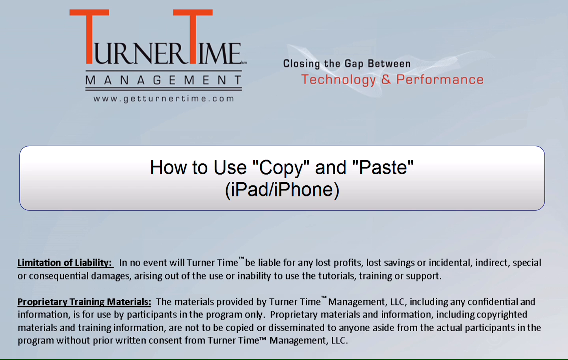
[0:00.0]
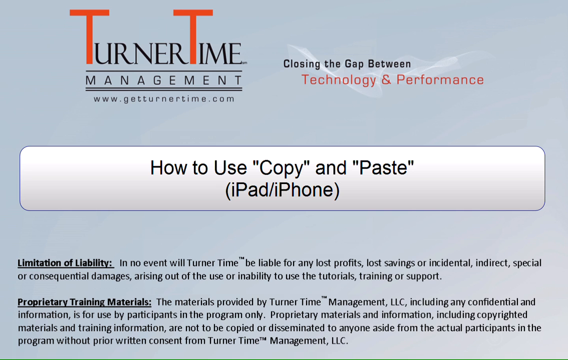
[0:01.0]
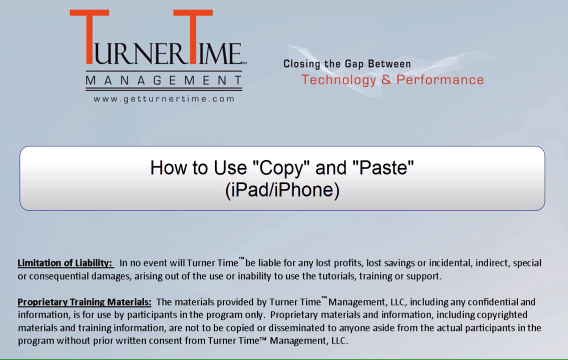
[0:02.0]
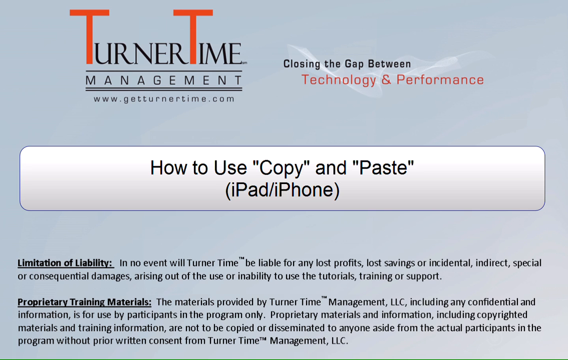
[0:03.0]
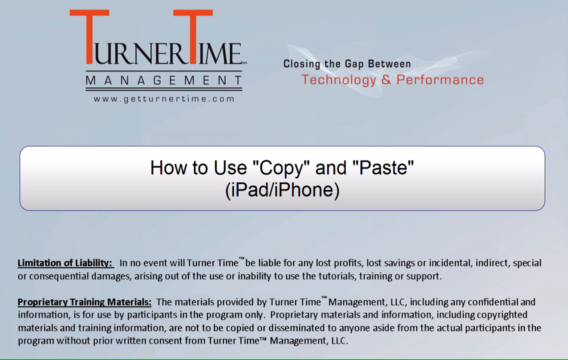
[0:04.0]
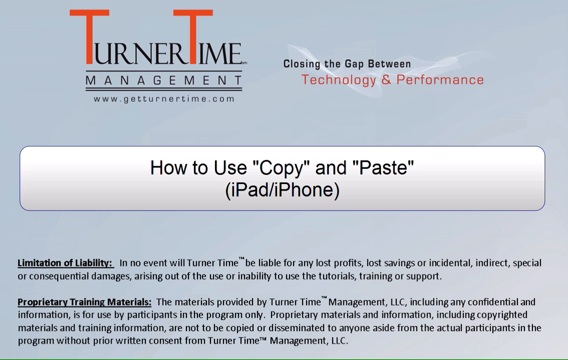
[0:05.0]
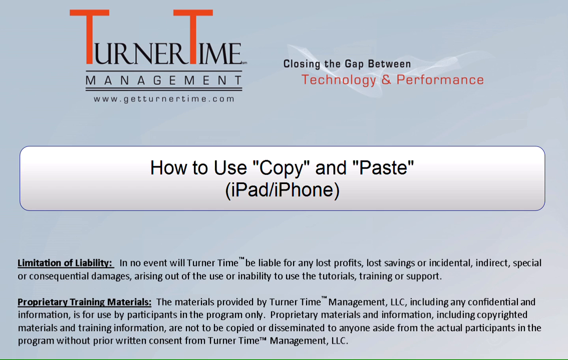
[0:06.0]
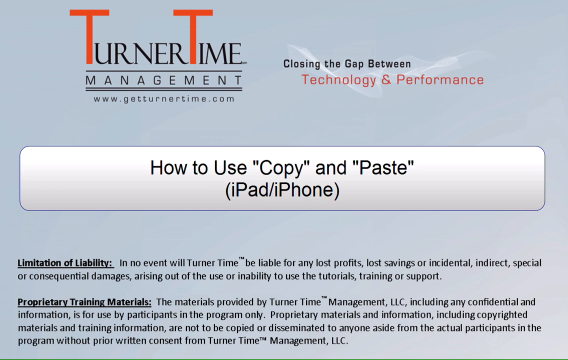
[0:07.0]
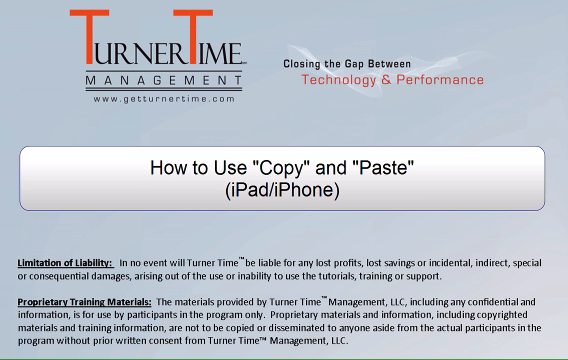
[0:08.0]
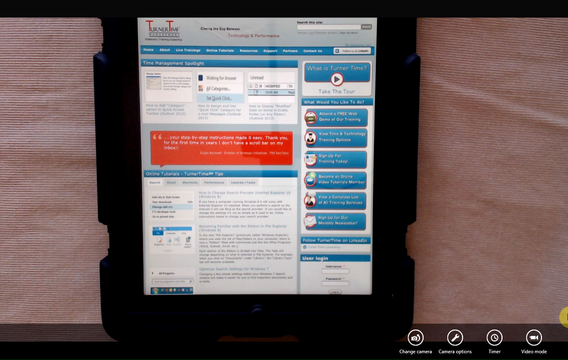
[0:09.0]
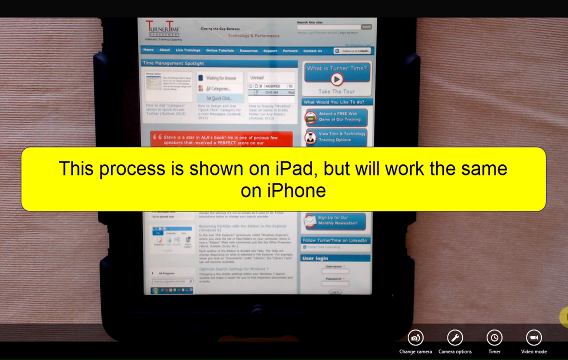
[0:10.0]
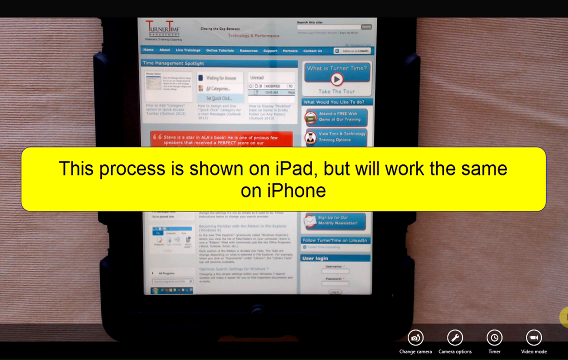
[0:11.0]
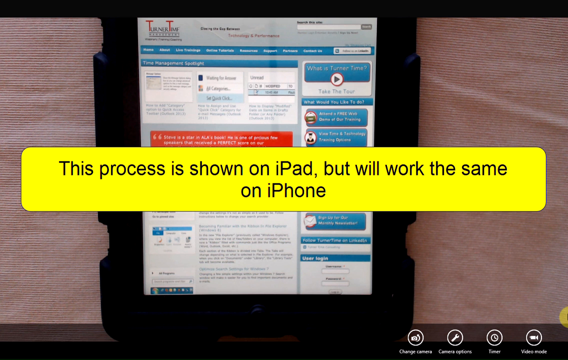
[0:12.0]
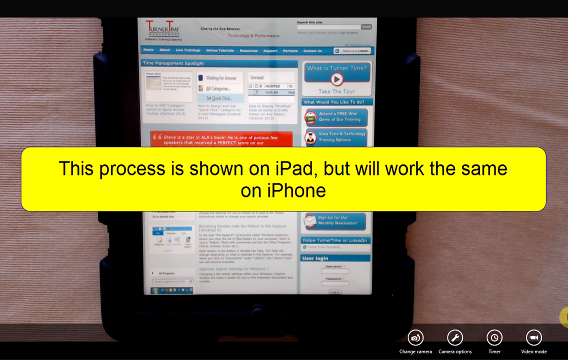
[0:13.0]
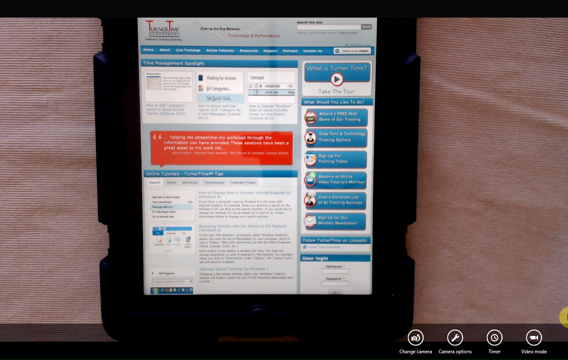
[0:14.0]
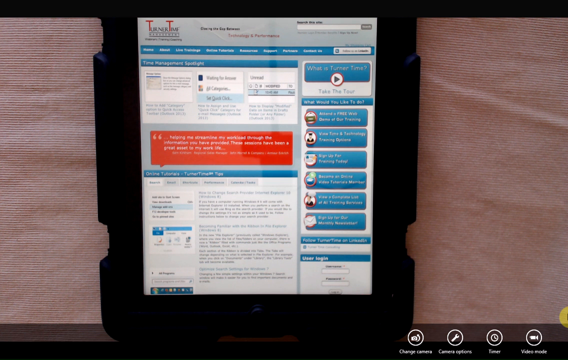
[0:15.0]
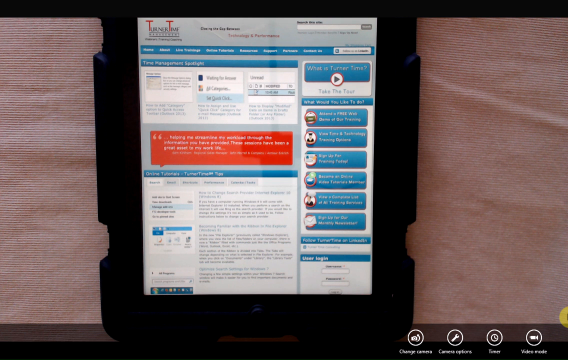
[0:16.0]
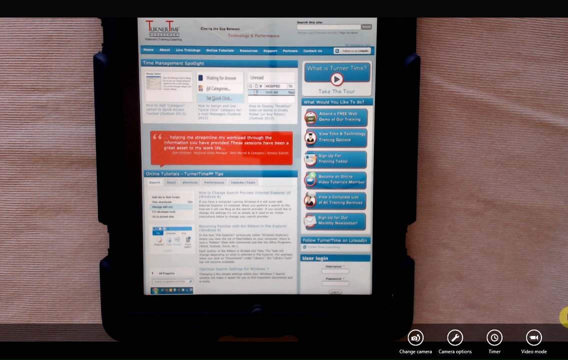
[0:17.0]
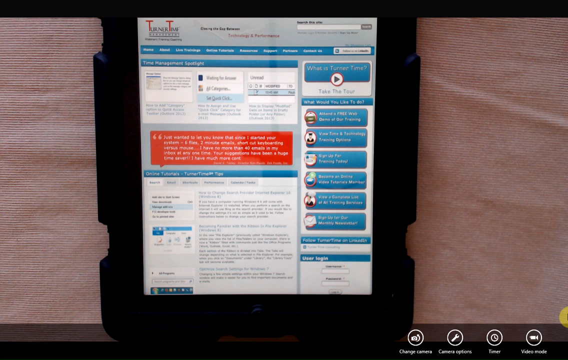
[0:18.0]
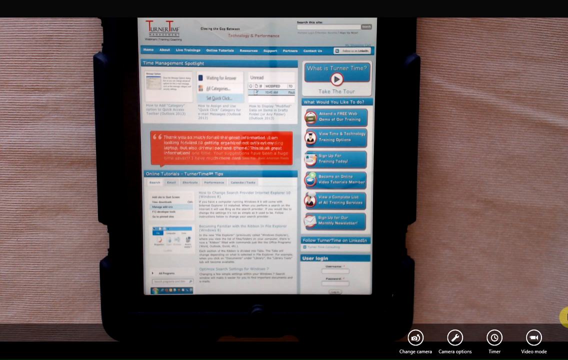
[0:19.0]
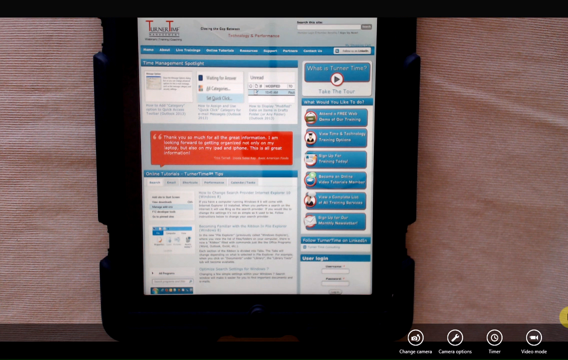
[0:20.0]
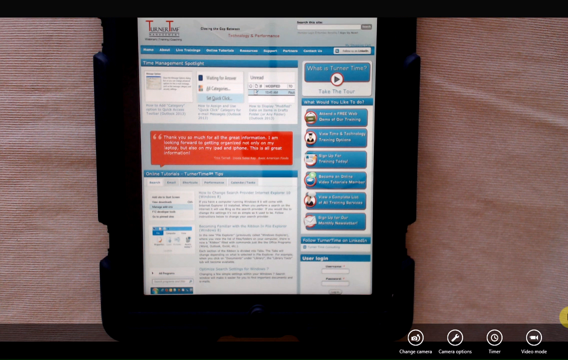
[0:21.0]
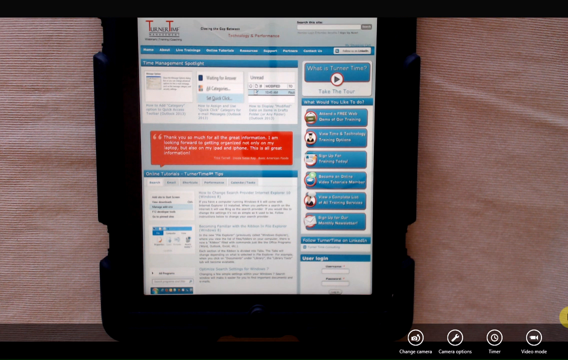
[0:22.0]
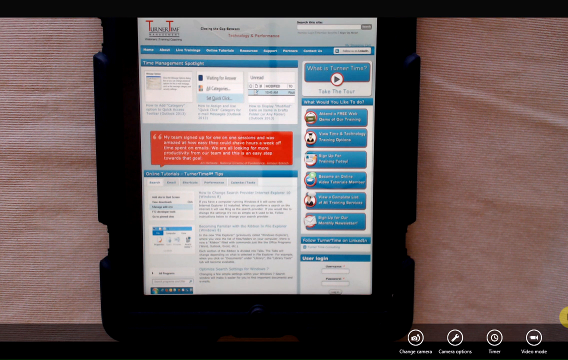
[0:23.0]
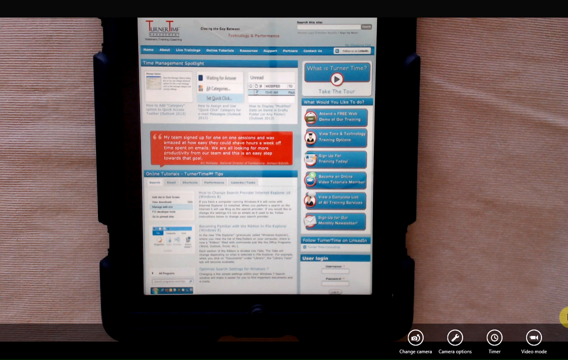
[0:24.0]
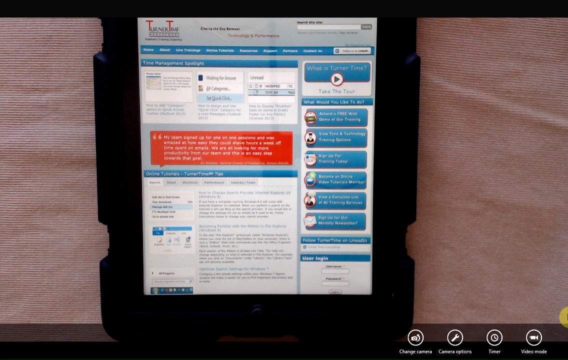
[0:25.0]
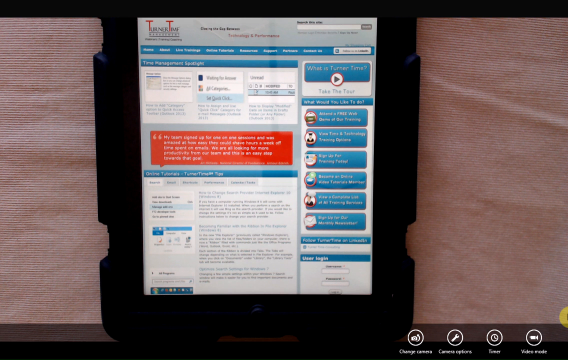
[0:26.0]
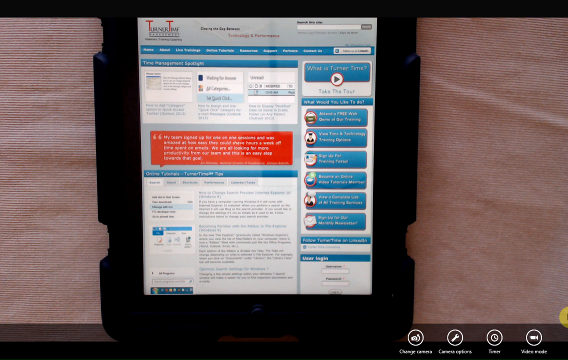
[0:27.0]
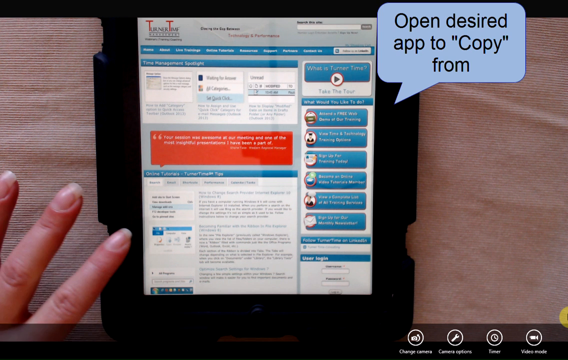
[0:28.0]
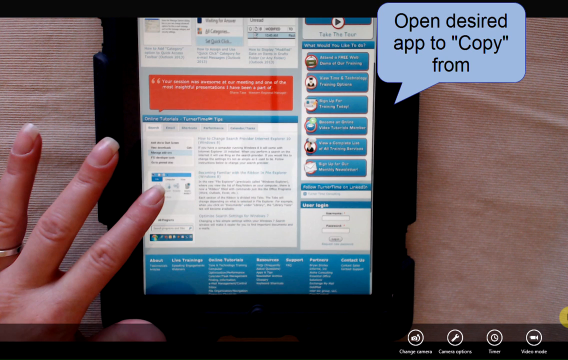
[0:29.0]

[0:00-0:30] The instructional video is titled "how to use copy and paste on an iPad or an iPhone" and is by Turner Time Management, with "get turner time.com" and the tagline "Closing the gap between technology and performance." Items such as limitation of liability and proprietary training materials are listed at the bottom. Text on screen says "this process is shown on iPad but it'll work the same on an iPhone." The view then looks directly at an iPad, which appears to display the company's own website. Nothing seems to change on the screen. Text reads "open desired app to copy from."